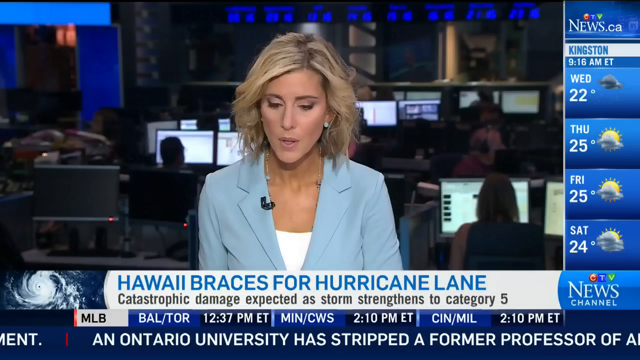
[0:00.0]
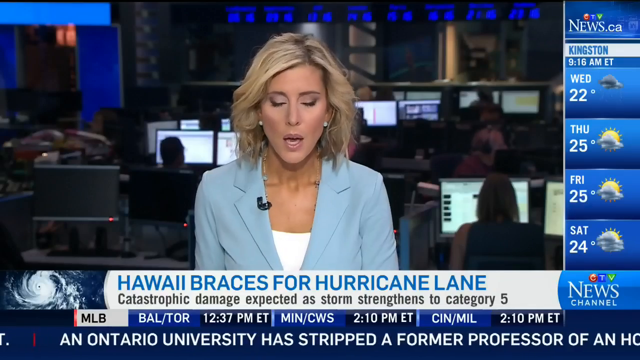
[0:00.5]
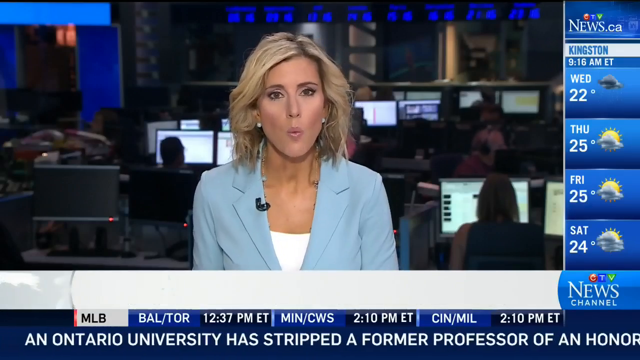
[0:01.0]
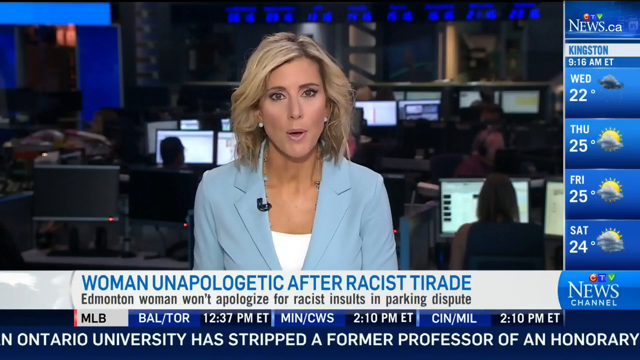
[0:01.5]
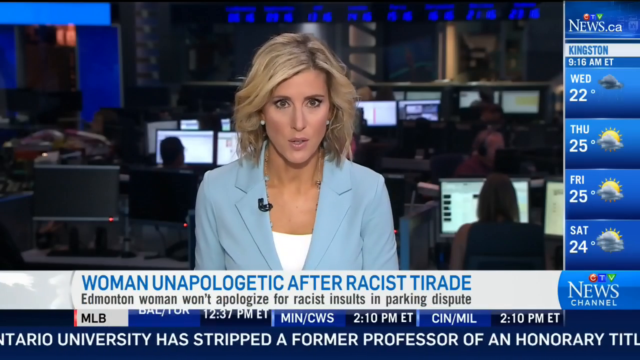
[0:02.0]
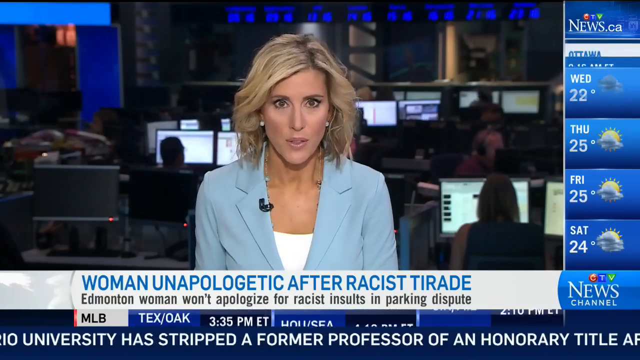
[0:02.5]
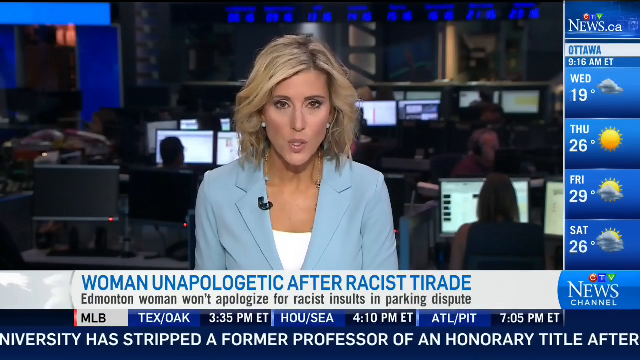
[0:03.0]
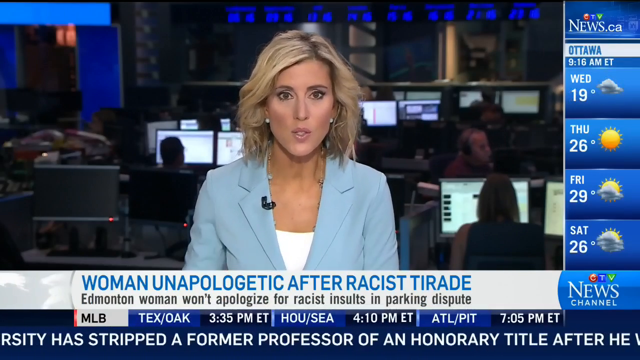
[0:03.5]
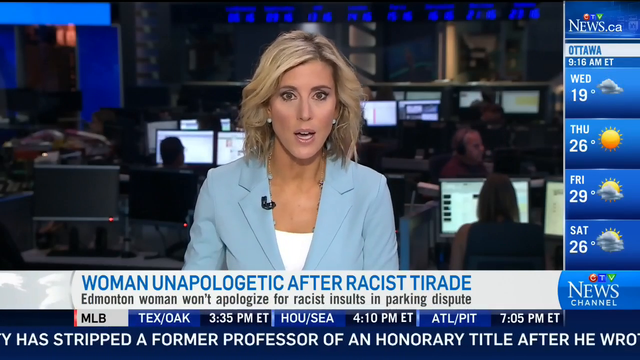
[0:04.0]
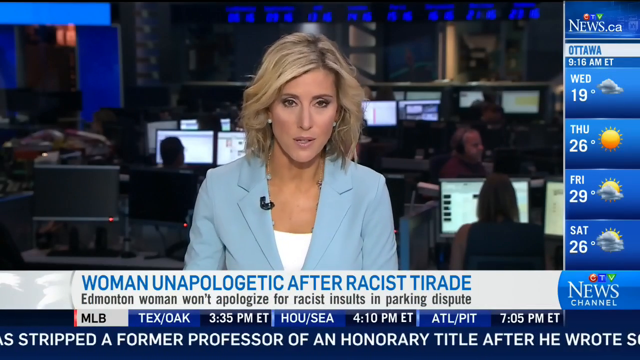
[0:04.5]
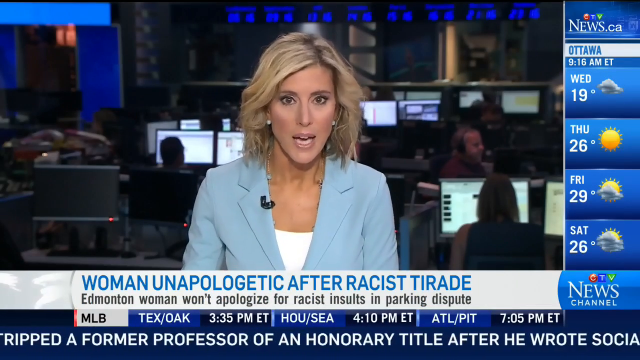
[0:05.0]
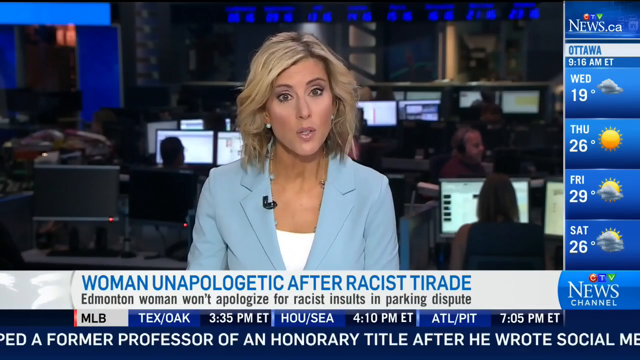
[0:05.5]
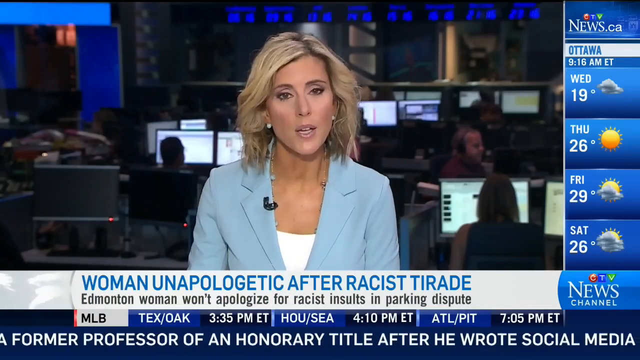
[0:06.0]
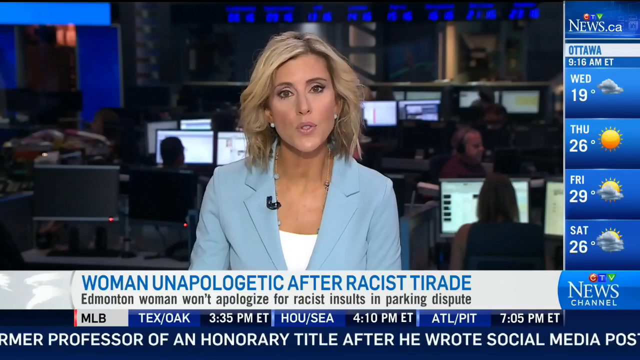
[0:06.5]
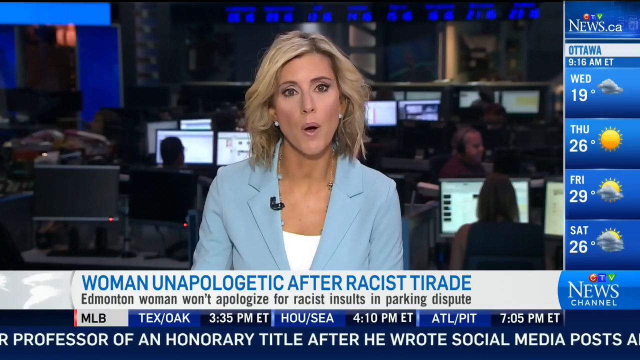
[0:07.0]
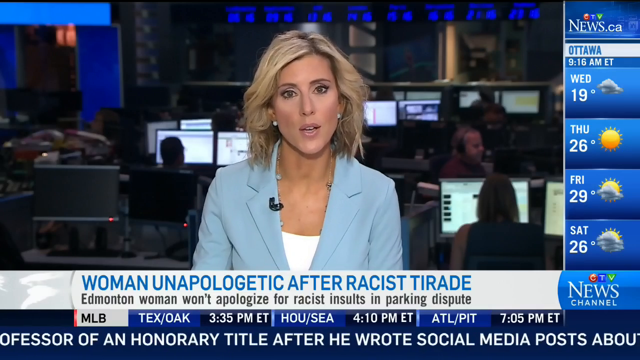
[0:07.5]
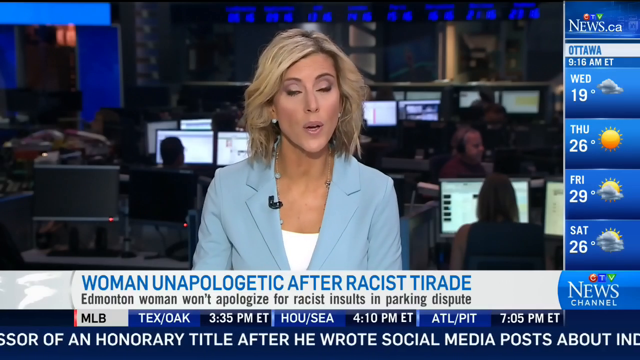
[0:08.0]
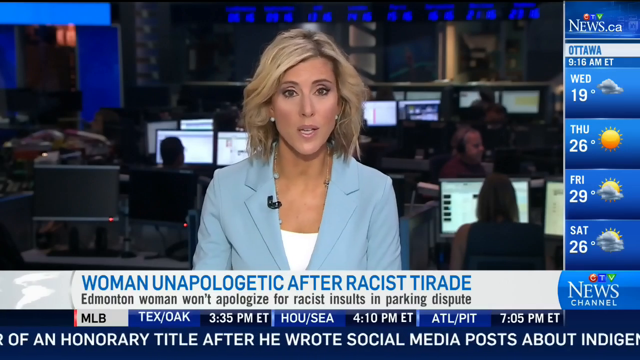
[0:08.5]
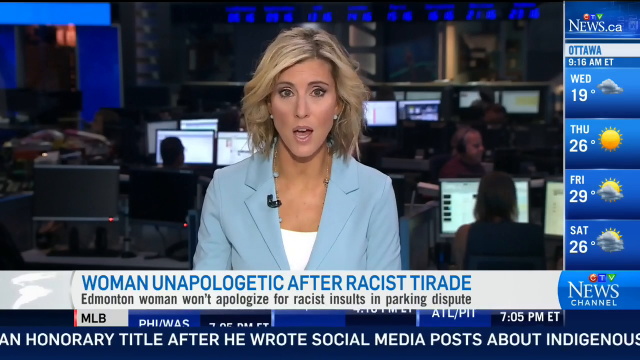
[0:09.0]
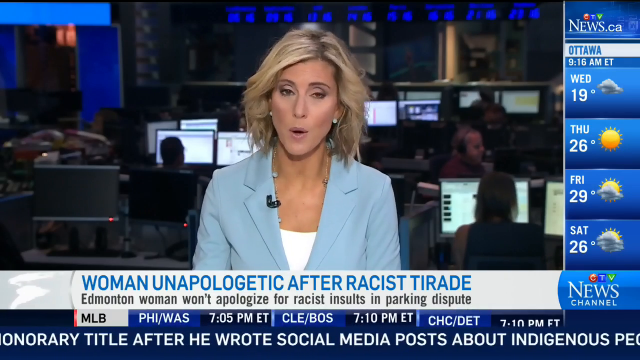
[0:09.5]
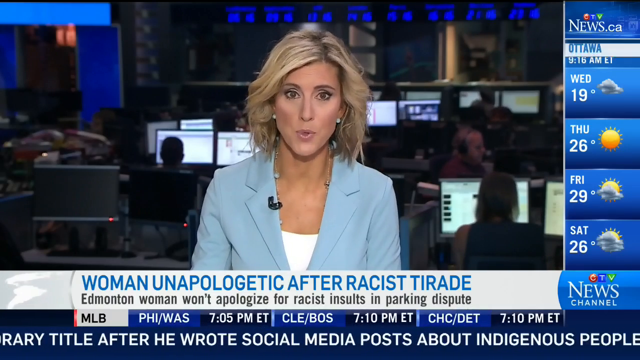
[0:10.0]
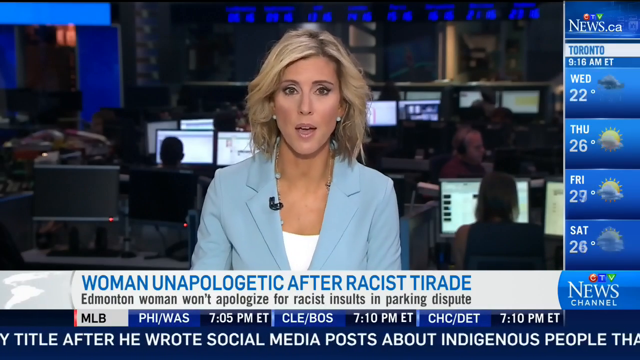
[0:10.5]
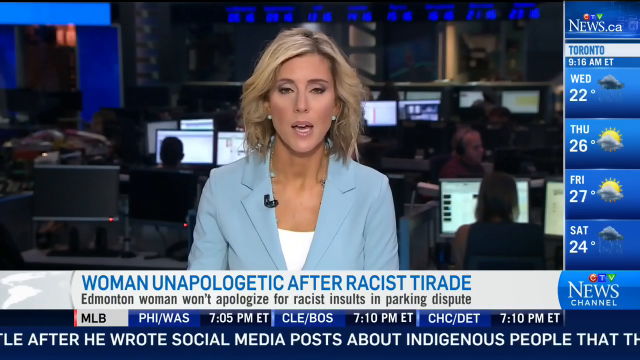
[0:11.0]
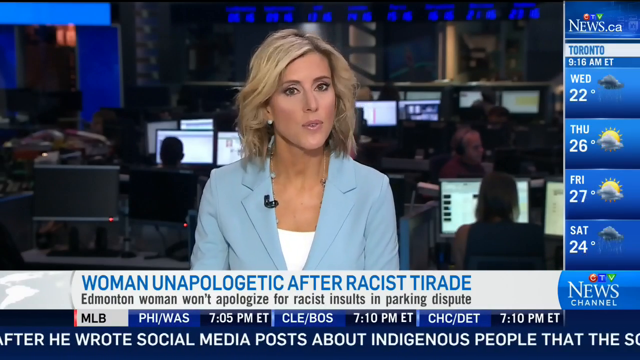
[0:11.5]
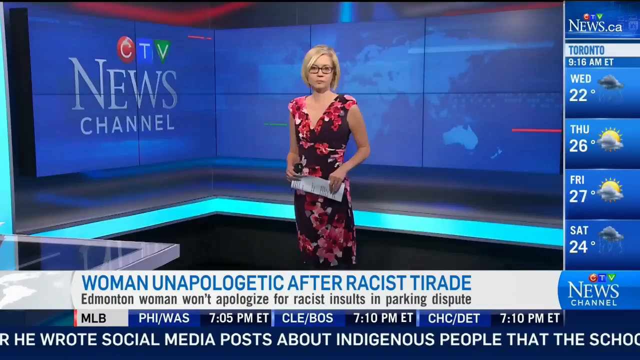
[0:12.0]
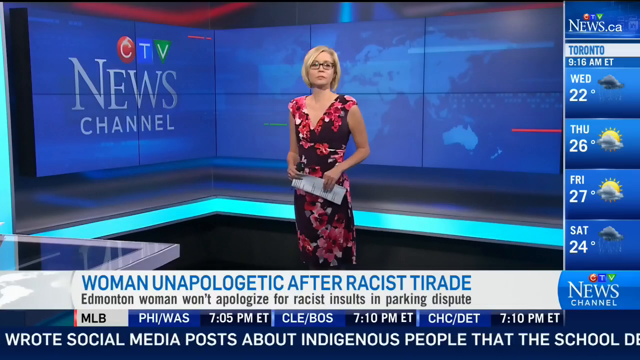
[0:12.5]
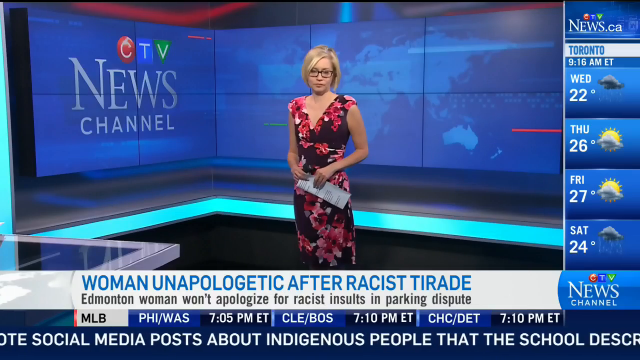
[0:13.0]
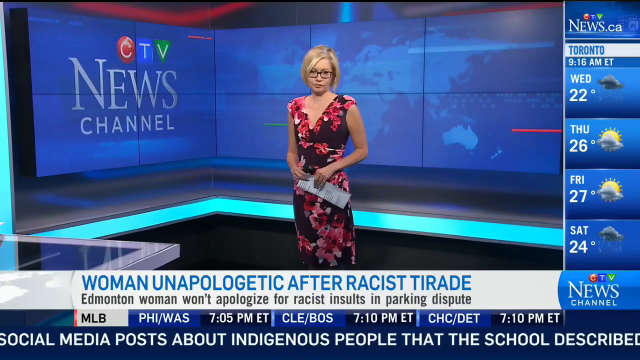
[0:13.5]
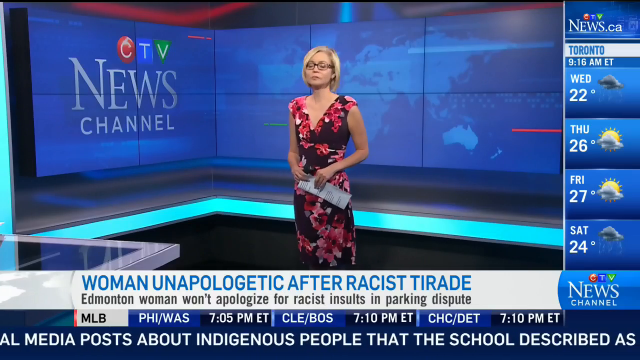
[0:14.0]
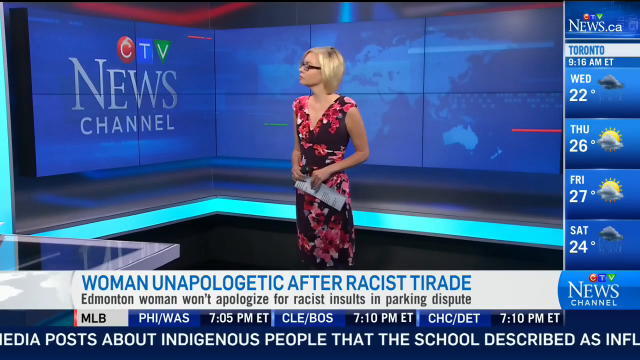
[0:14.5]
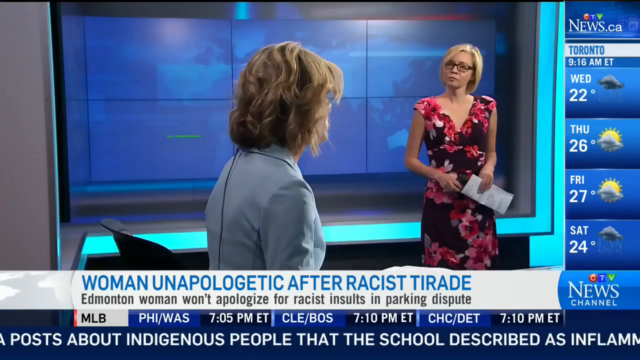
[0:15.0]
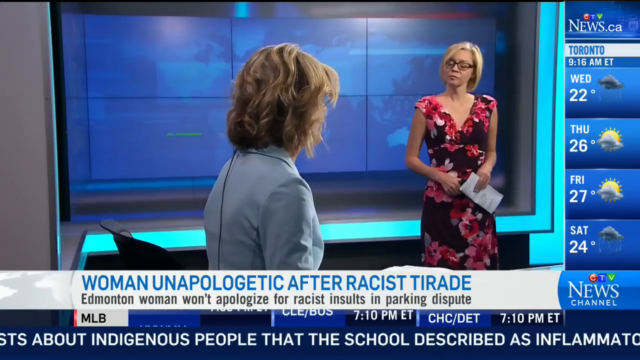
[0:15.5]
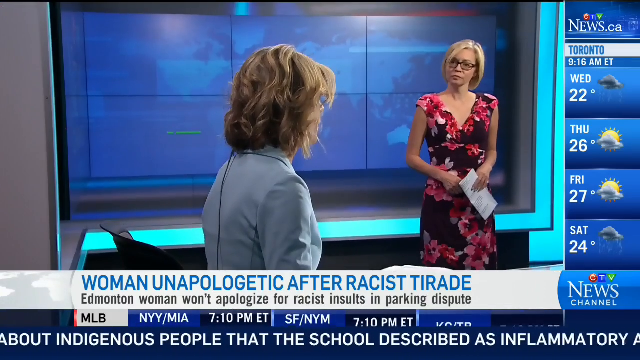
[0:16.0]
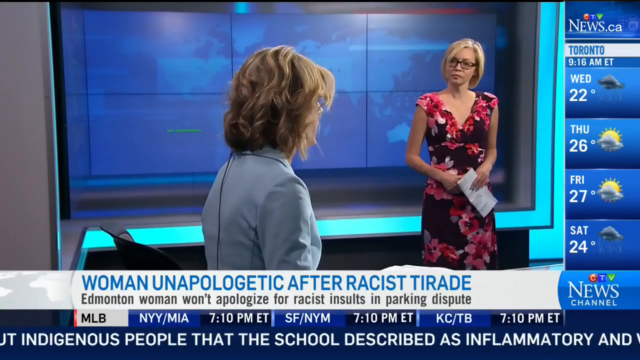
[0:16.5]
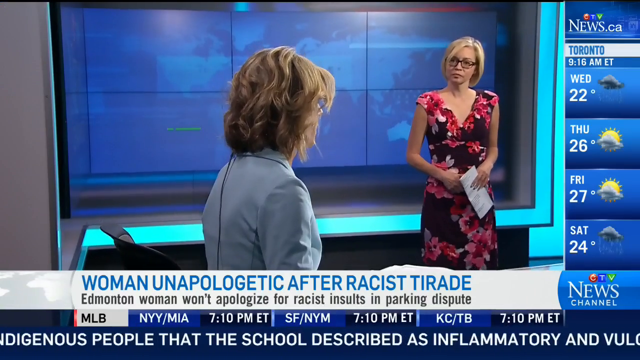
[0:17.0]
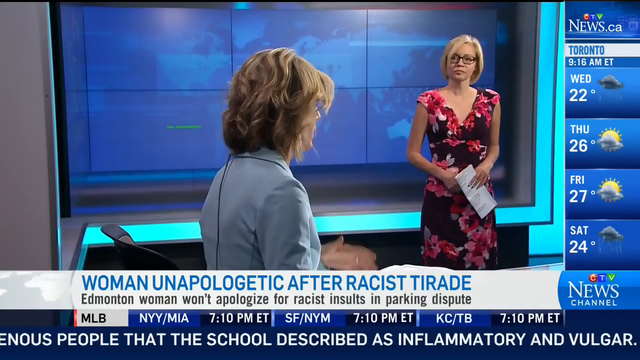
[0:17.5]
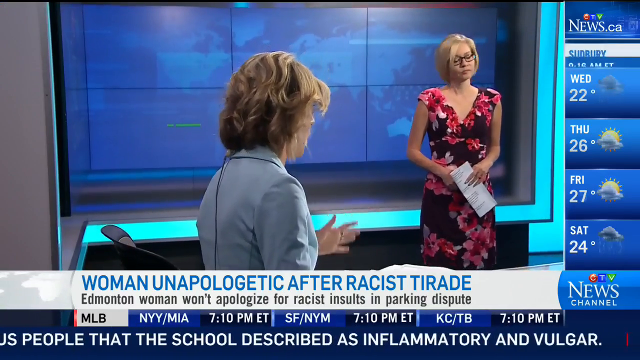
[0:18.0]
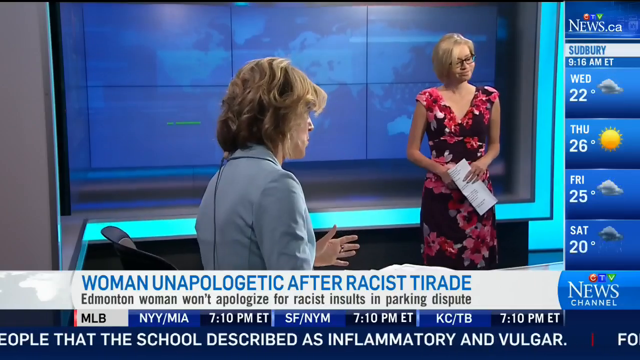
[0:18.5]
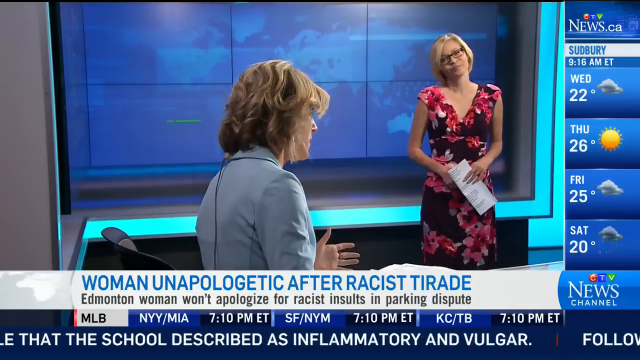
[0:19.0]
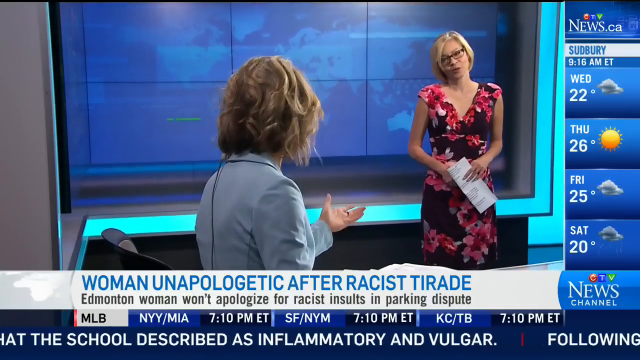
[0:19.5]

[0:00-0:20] The video opens in a newsroom with a white female anchor who appears to be in her mid-30s. Her short hair reaches her shoulders, and she wears what seems to be an open blazer over a white shirt, with a microphone on her collar. A banner below her reads "Woman unapologetic after racist tirade," and a line of text reads "Edmonton woman won't apologize for racist insults and parking dispute." On the right-hand side there is what looks like a weather display for "Ottawa": Wednesday 19 degrees, Thursday 26 degrees, Friday 29 degrees, Saturday 26 degrees. Other people in the newsroom look like they are going about their daily work; none of them are walking around, and they seem to all be sitting. The camera pans over to another person, seemingly another news presenter, who was standing out of view and is now seen standing next to the anchorwoman.